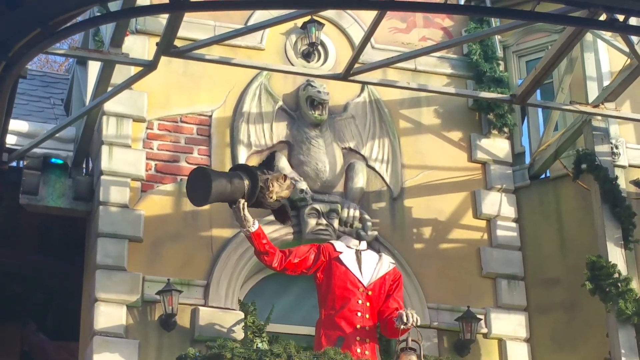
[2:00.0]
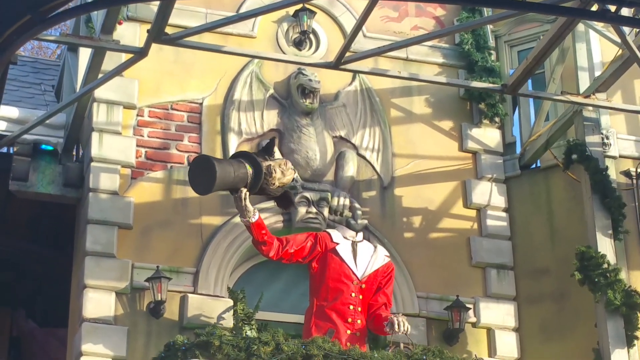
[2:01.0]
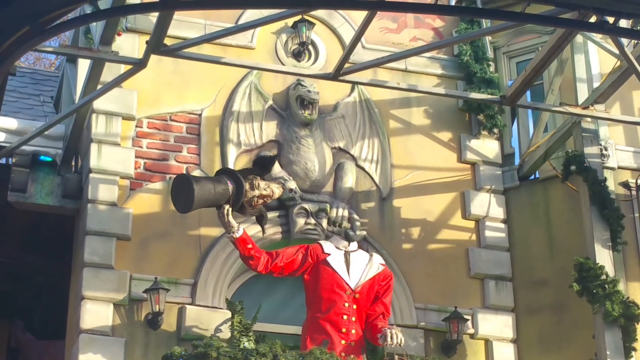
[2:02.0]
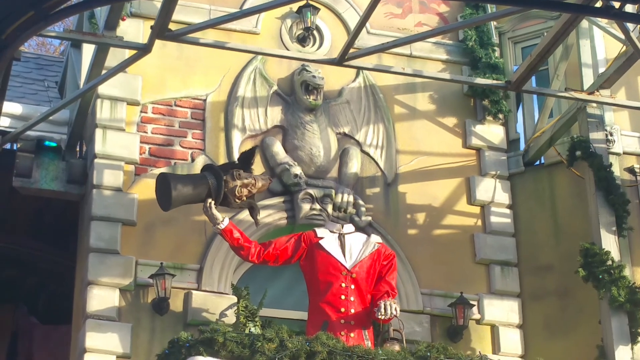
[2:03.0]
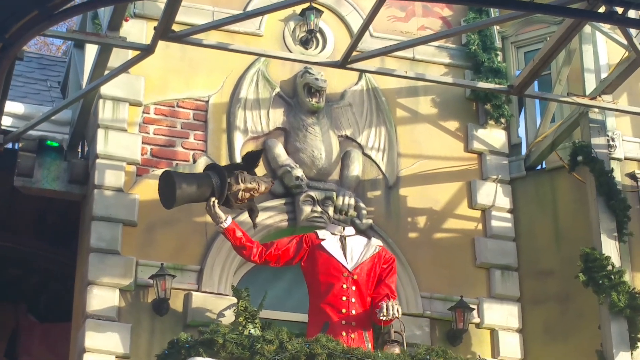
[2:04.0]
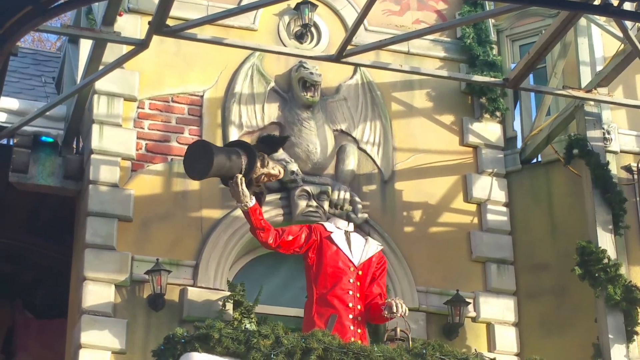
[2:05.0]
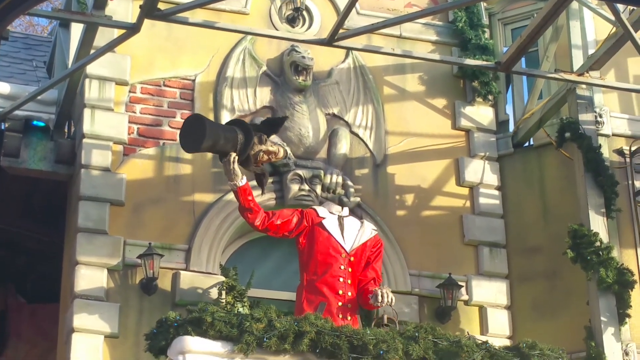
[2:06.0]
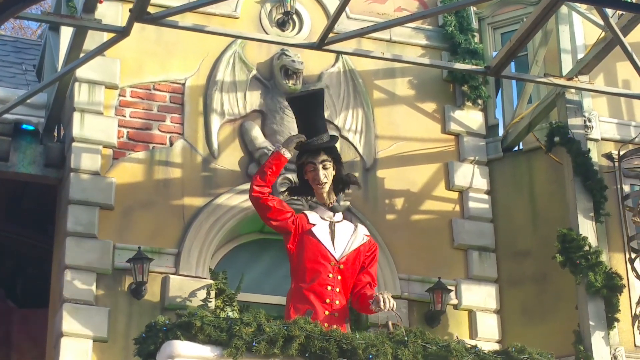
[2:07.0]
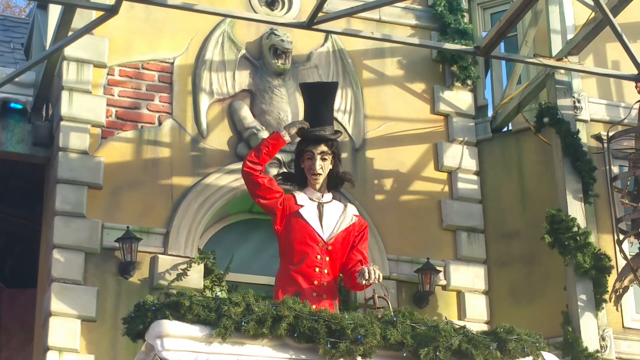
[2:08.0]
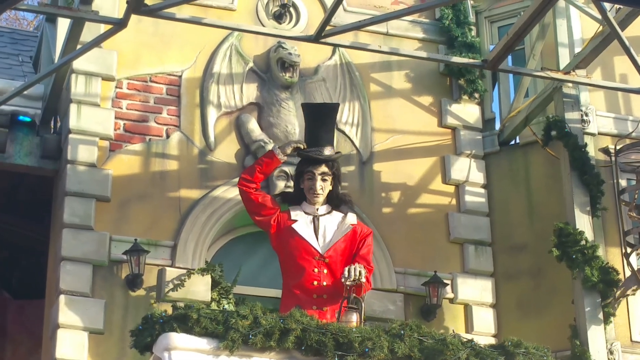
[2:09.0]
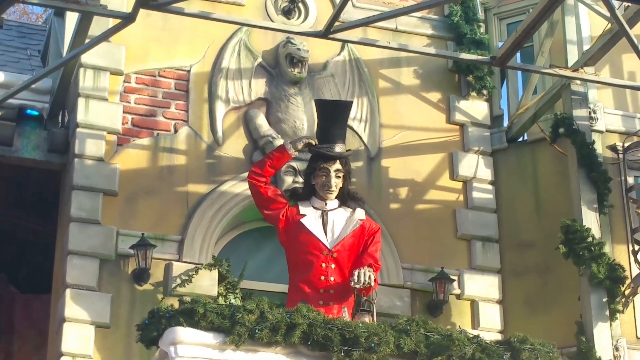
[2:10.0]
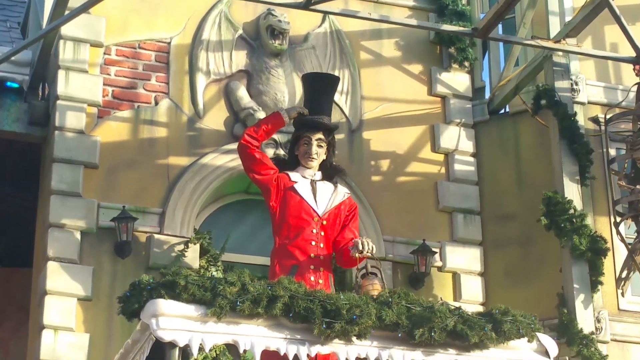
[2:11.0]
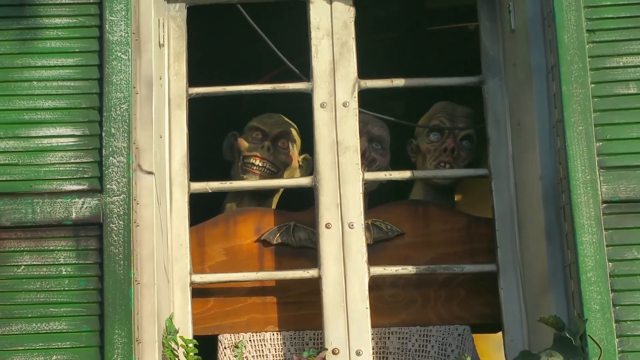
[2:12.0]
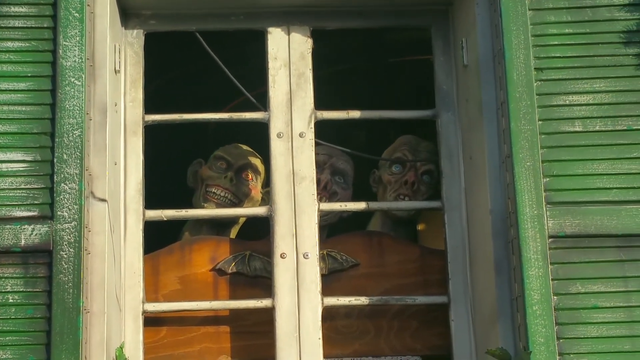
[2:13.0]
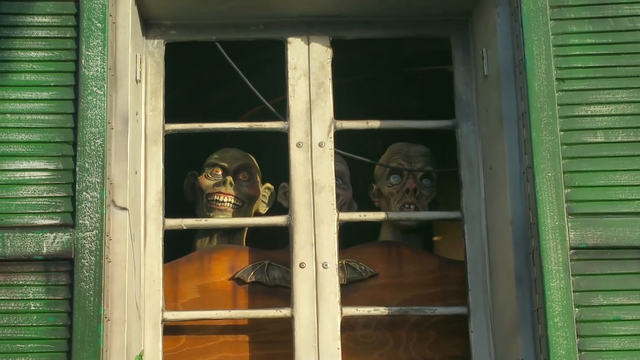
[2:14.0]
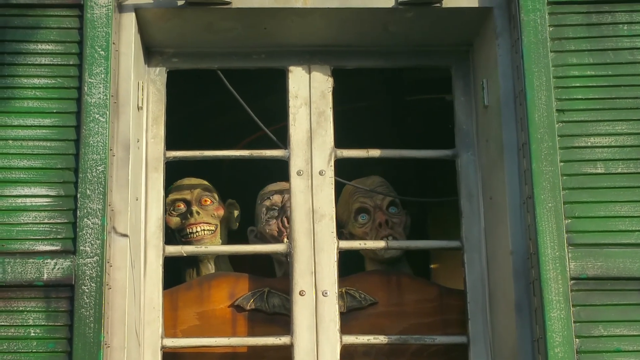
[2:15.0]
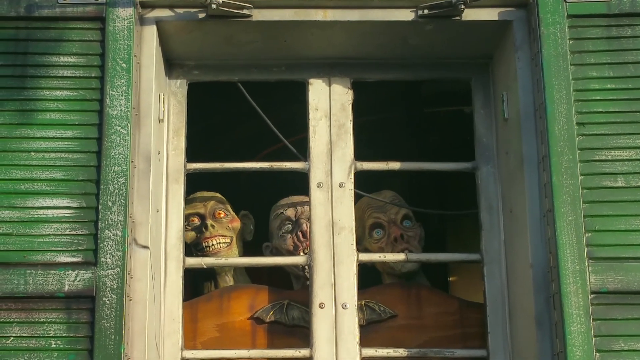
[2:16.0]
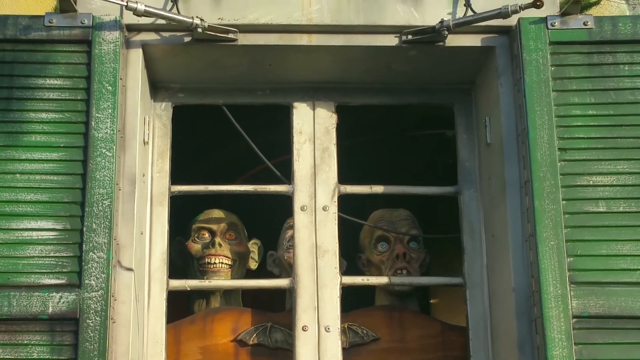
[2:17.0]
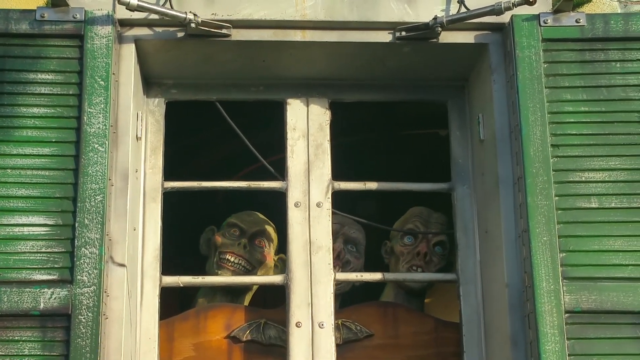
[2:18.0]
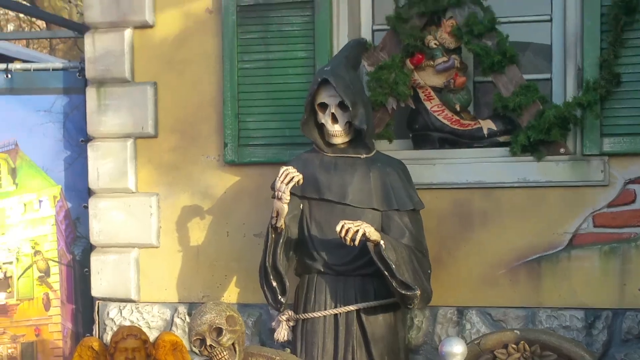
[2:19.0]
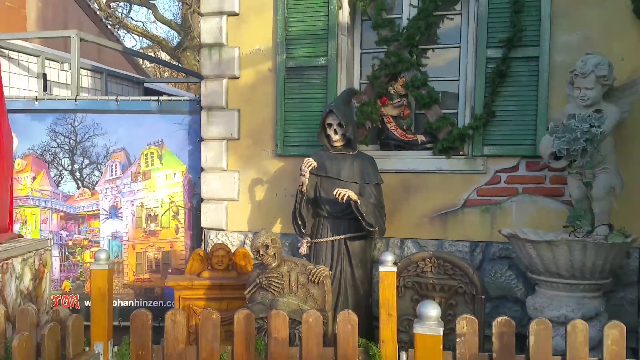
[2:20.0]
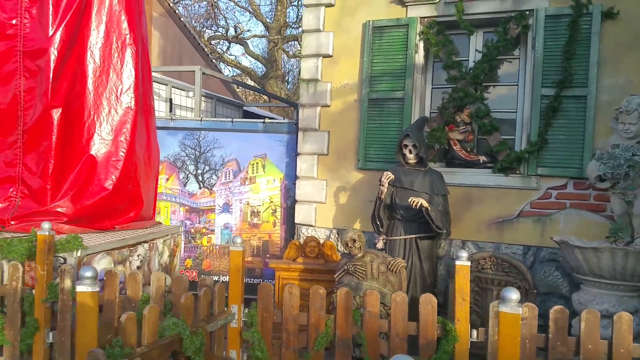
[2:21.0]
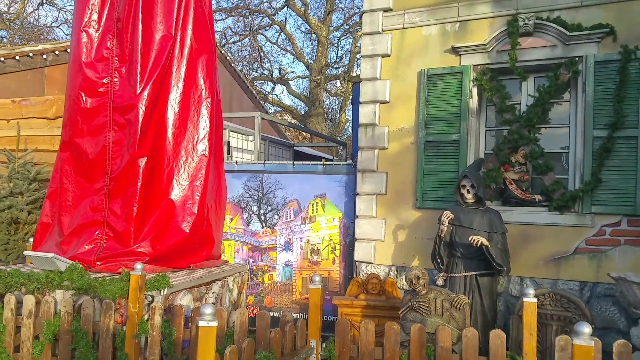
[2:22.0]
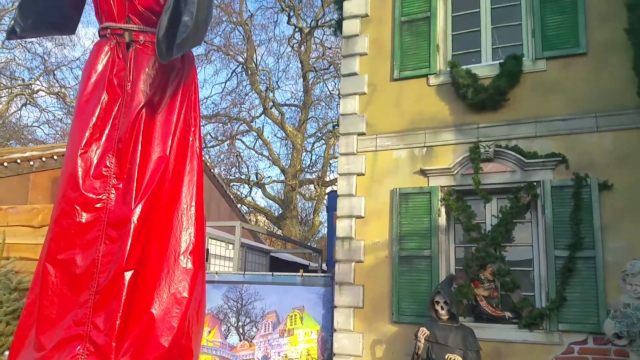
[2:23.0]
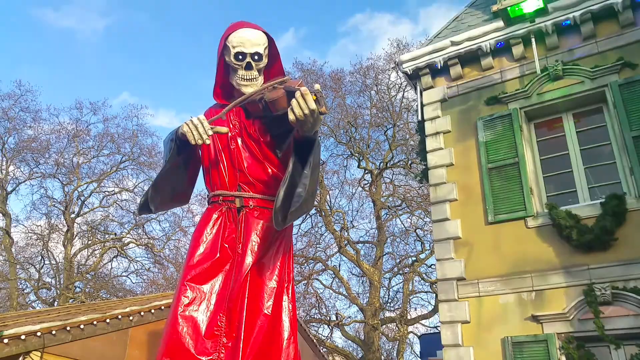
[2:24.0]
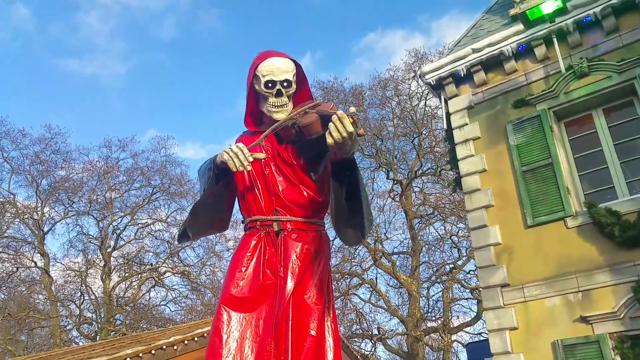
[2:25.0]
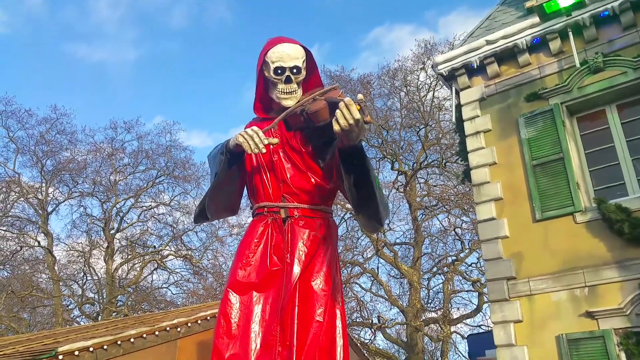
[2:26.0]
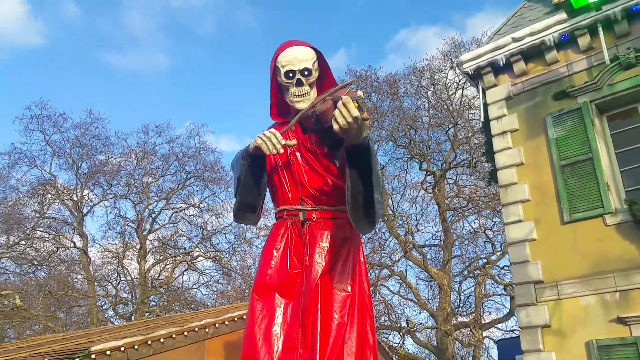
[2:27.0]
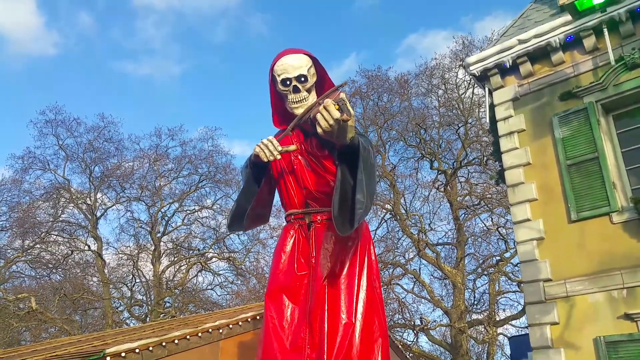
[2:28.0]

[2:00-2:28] The man holds his head by the top hat while his body keeps moving and his mouth still moves. He turns, puts his head back on, and his lantern starts to rock. The camera pans to what appears to be a three-headed man in an orange shirt inside the house, seen through a window. The heads have grotesque-like faces, alien-like bulging eyes, bald heads with giant ears and menacing teeth; one is smiling, one has a more somber appearance, and the face of the middle one is blocked by the window pane. They move their heads slowly from side to side. The camera then pans to a Grim Reaper outside the home, which appears to just stand in a display at the front of the house and does not appear to move. Finally the camera pans to a very tall skeleton playing the violin again; he wears a red and black cape with black sleeves, the rest of the cape and the hood being black, and he turns from side to side as the video ends.